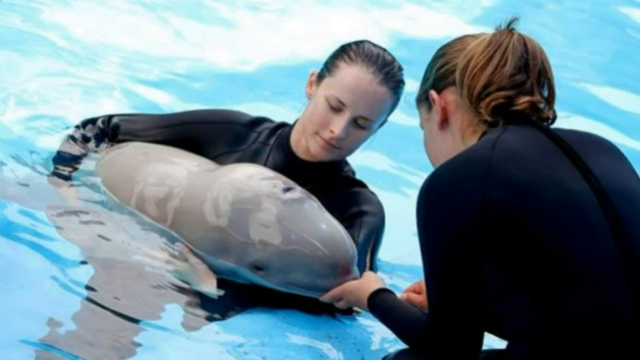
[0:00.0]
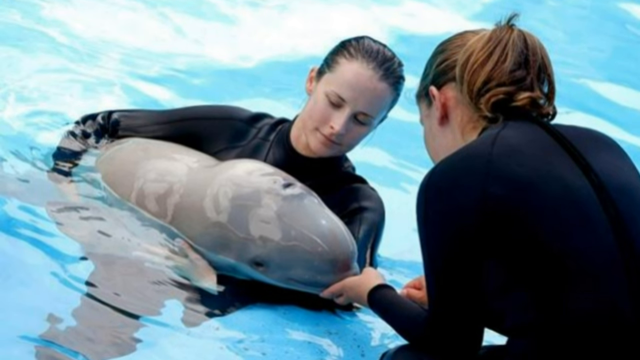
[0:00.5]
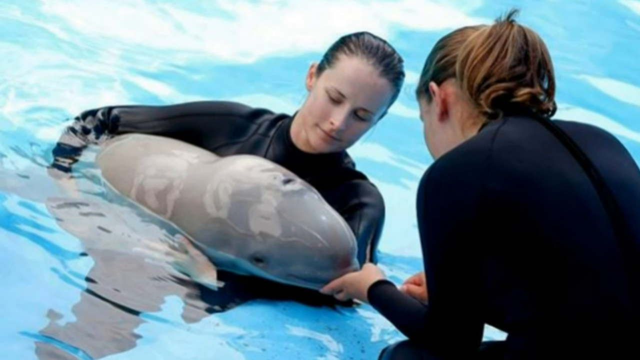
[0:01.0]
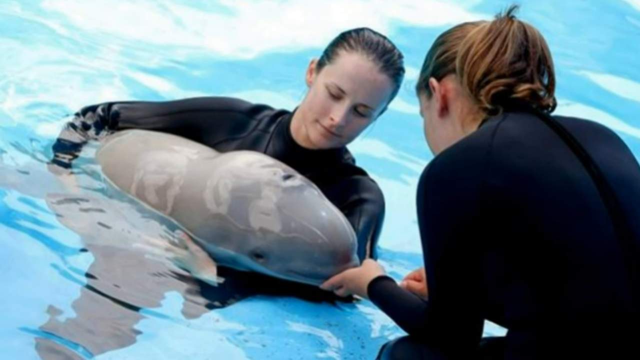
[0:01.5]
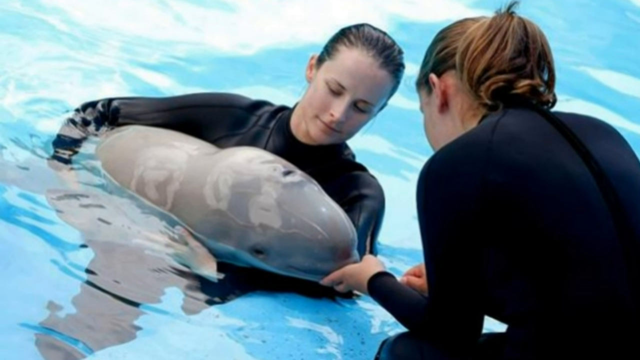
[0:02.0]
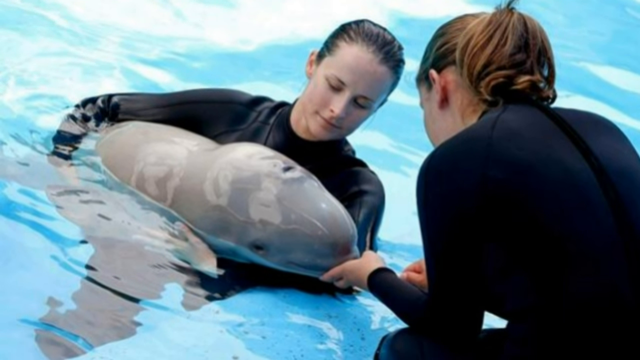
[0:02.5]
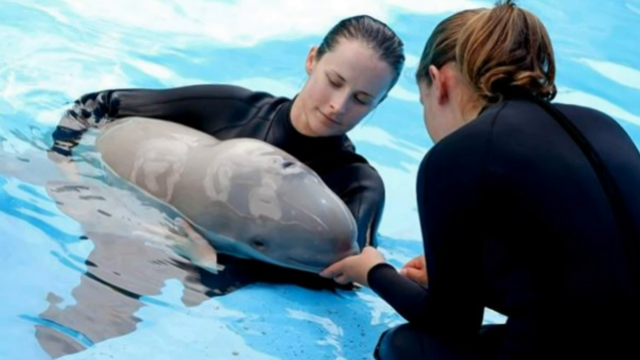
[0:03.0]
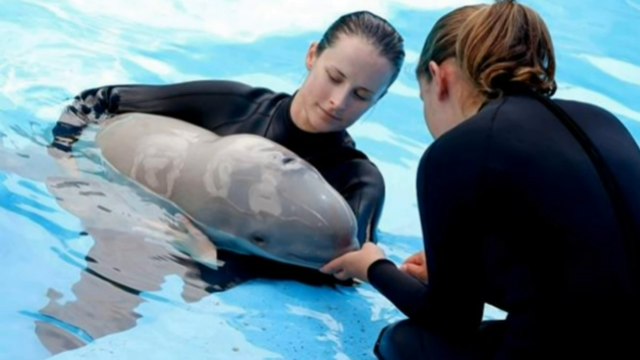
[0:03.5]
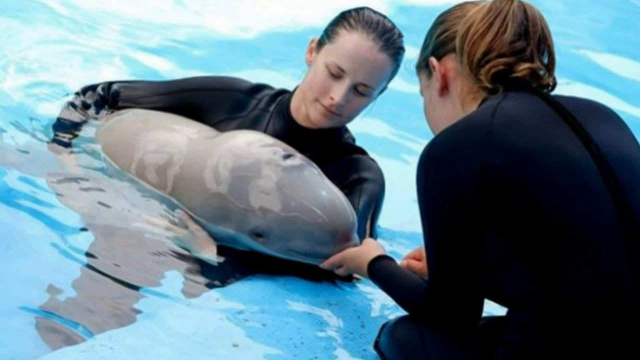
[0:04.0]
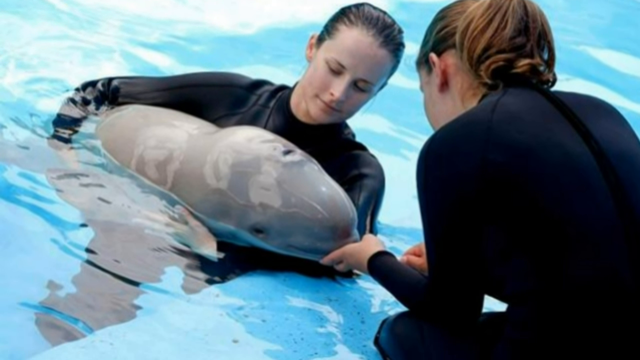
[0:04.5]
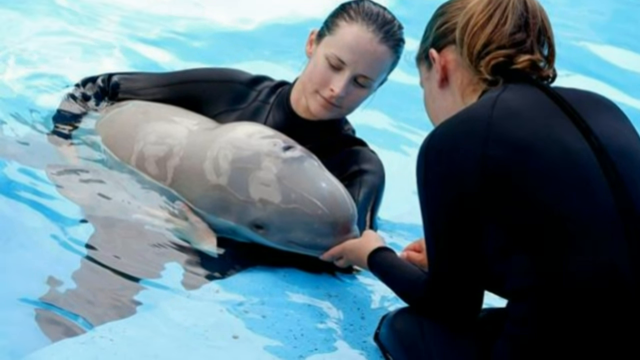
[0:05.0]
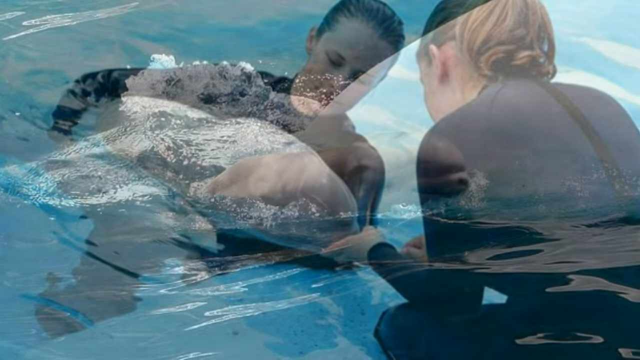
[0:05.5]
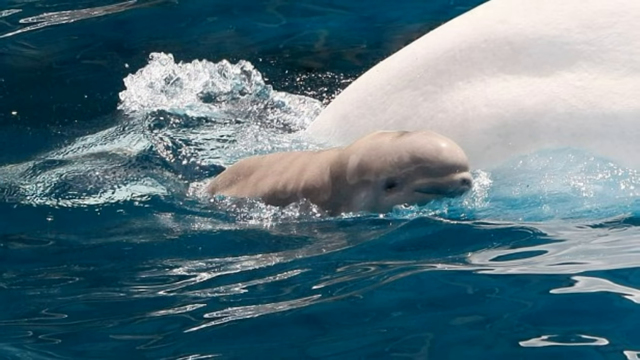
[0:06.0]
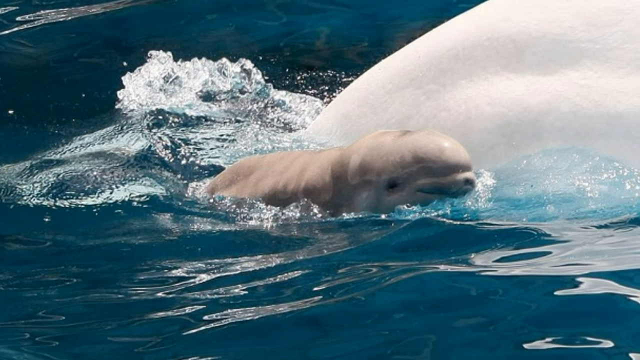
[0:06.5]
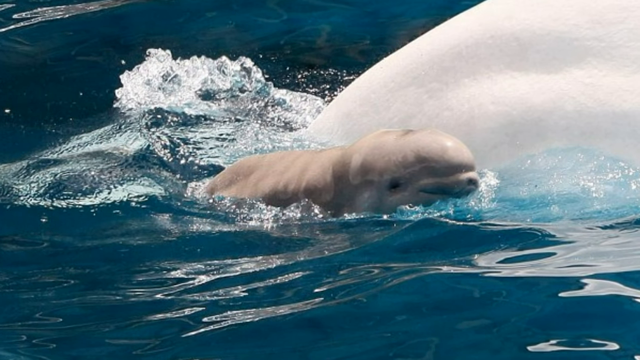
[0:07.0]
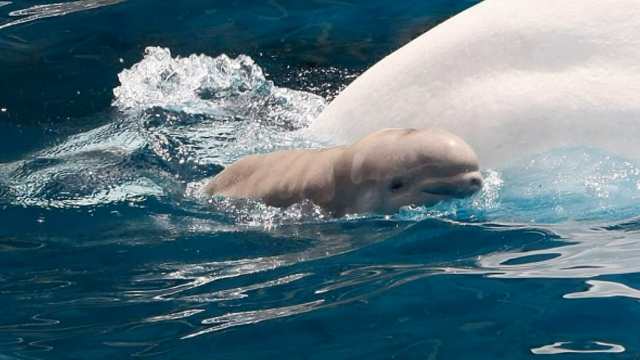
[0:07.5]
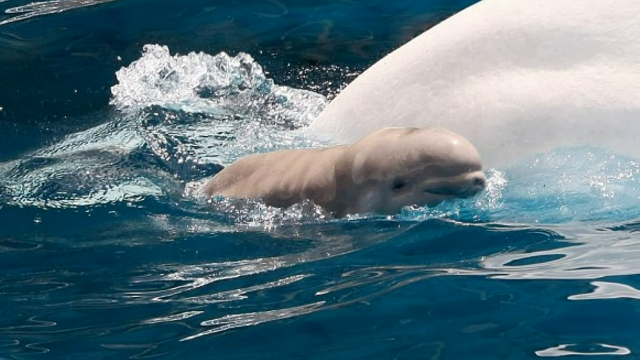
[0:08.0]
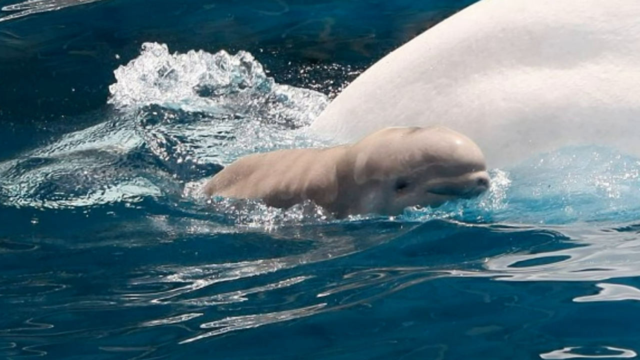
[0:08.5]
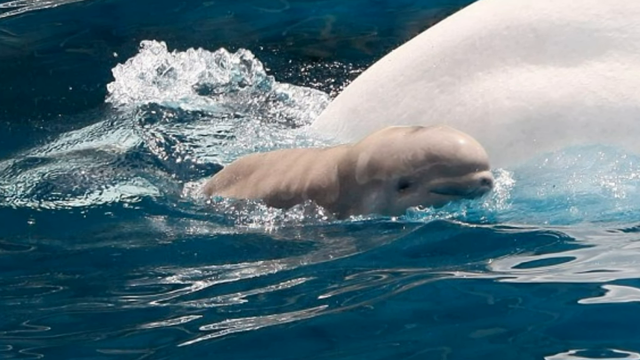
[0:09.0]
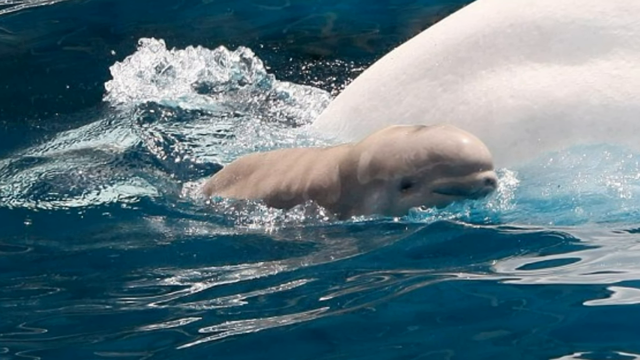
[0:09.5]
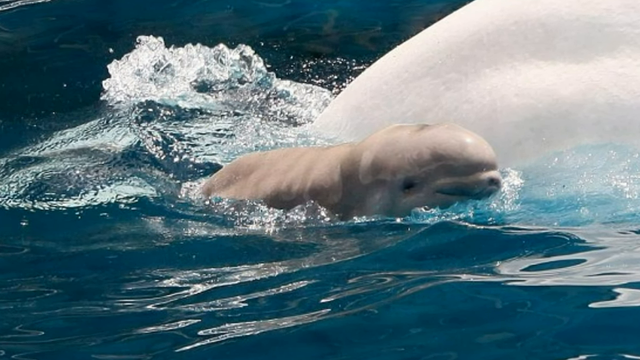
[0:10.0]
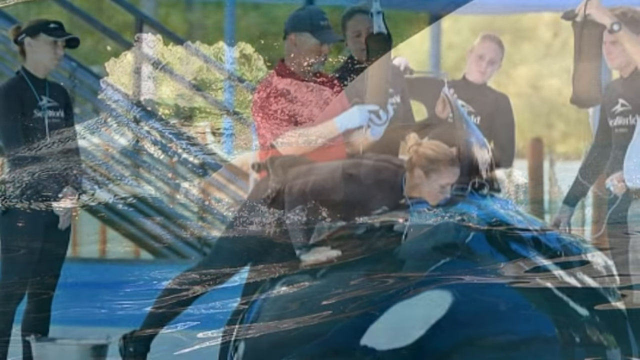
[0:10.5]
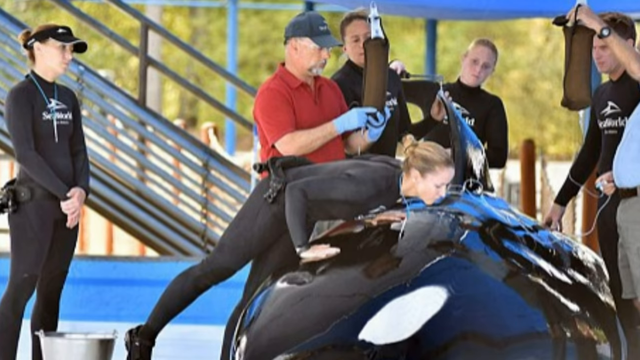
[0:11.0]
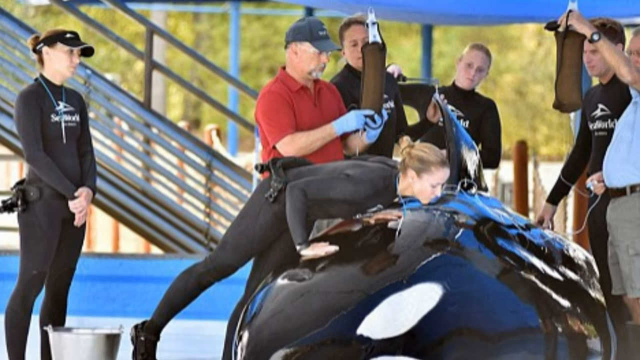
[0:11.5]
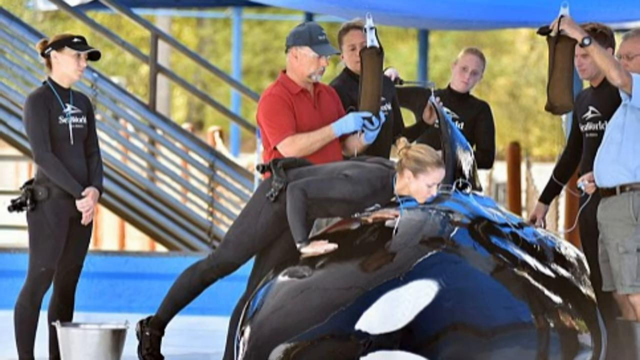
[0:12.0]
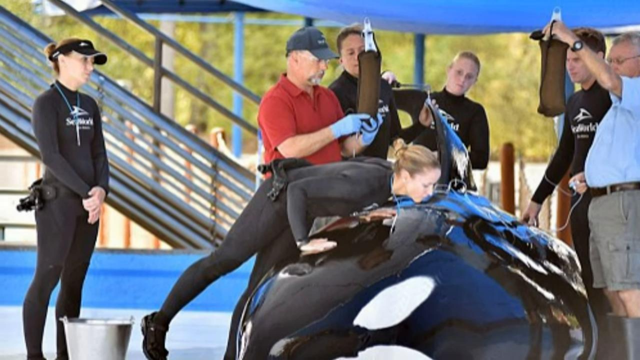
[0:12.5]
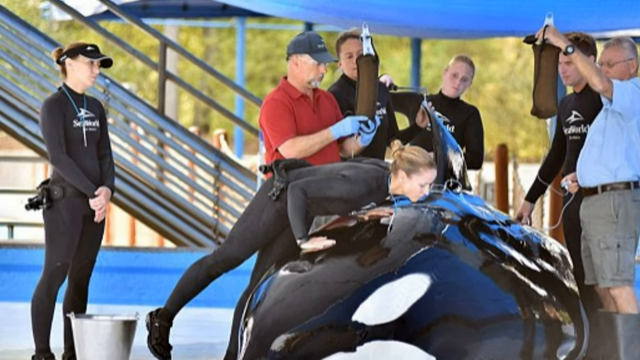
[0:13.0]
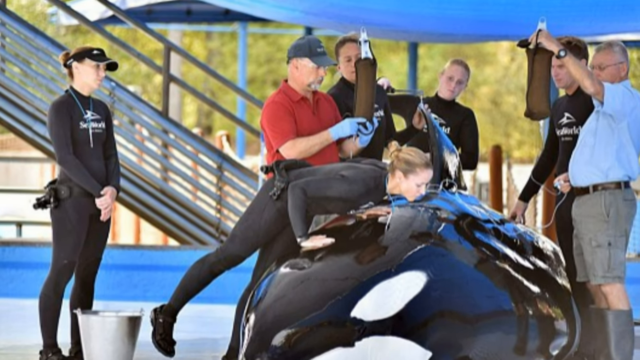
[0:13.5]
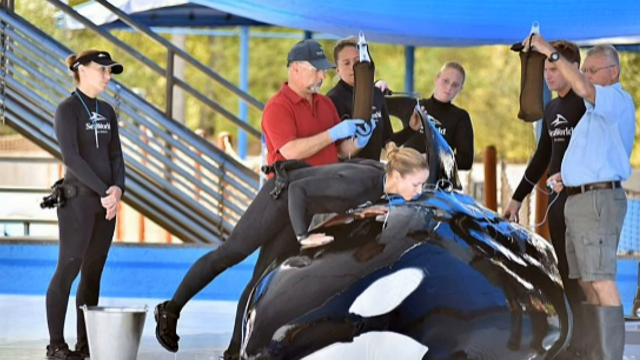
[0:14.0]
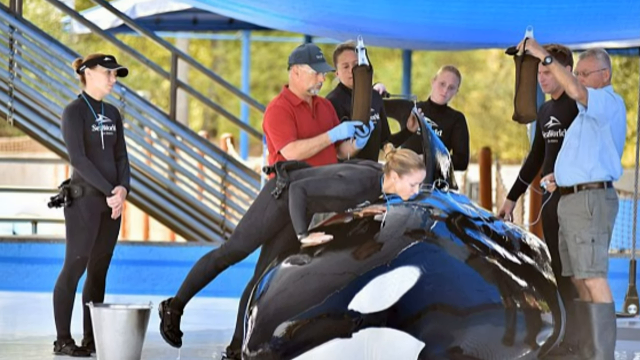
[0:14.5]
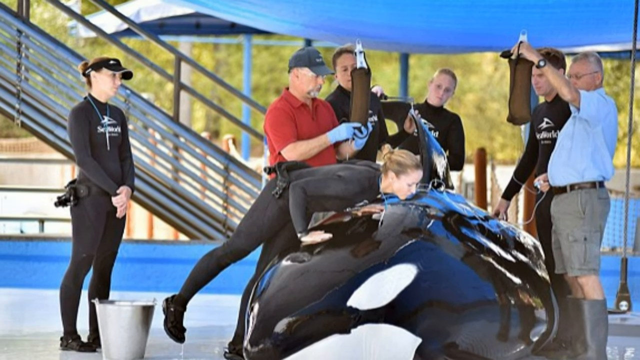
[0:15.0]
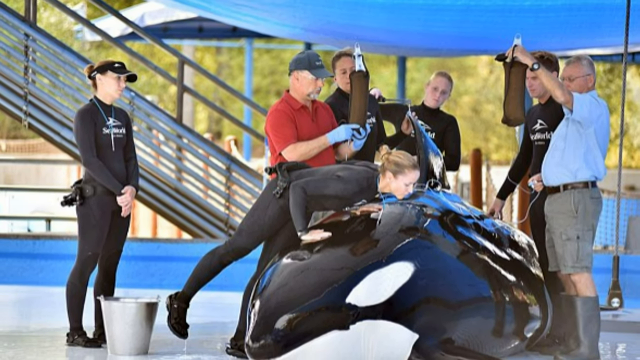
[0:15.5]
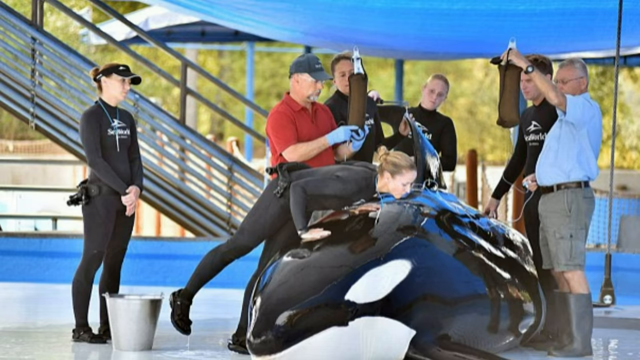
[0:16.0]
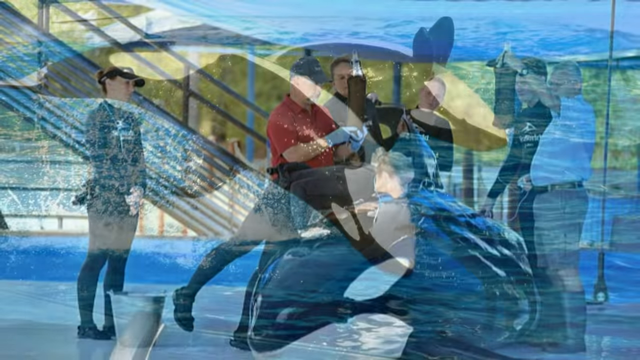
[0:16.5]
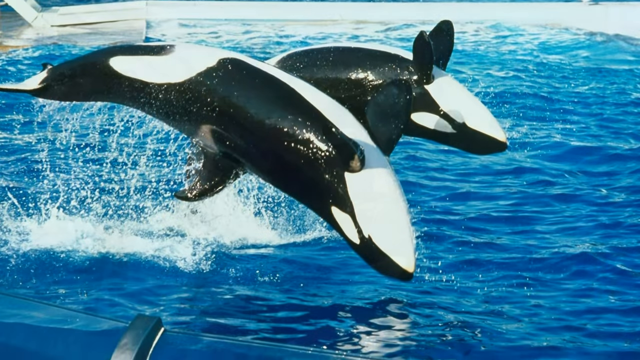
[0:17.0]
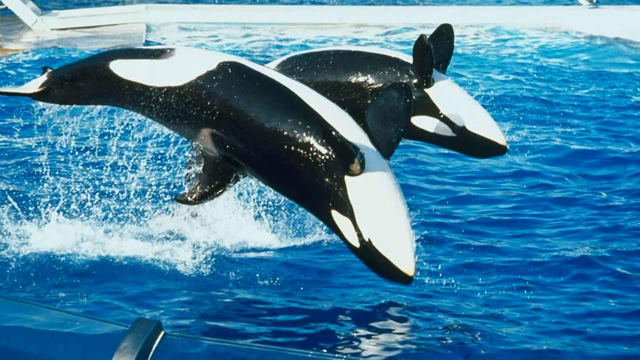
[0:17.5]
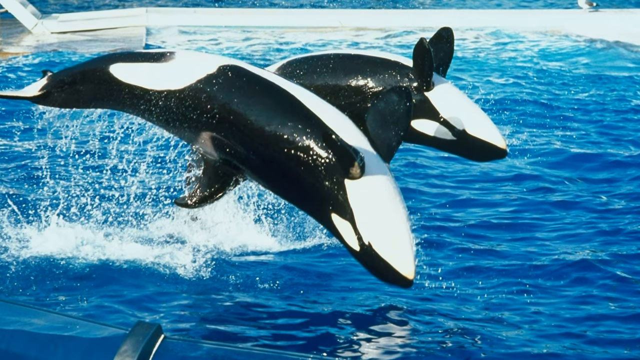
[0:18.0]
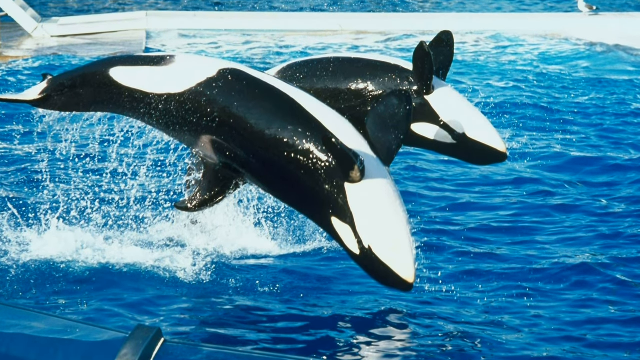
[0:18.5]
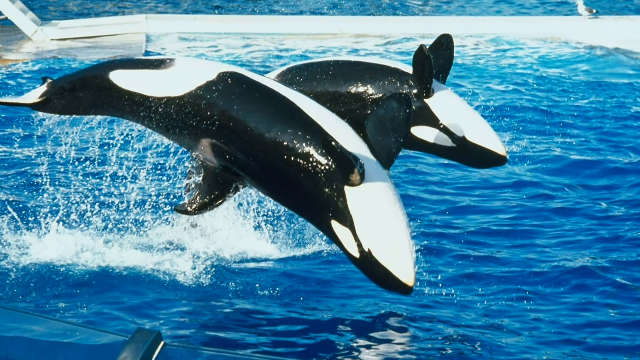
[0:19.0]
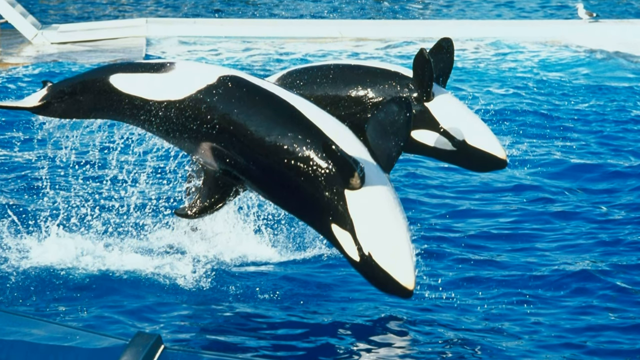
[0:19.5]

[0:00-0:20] Two women are in the water with a baby orca, partly submerged in a river, and they are not seen very well. Both women have dark brown hair and wear black swimming suits. One holds on to the baby orca with both hands while the other feeds it. The video transitions to an orca in sky-blue water, with water splashing behind the baby orca. Next, a woman in a black swimming suit leans forward to kiss the body of a giant orca while another woman, in black swimming trunks and a black cap, observes. A man in a red t-shirt and black baseball cap, wearing light blue gloves, stands next to the giant orca.